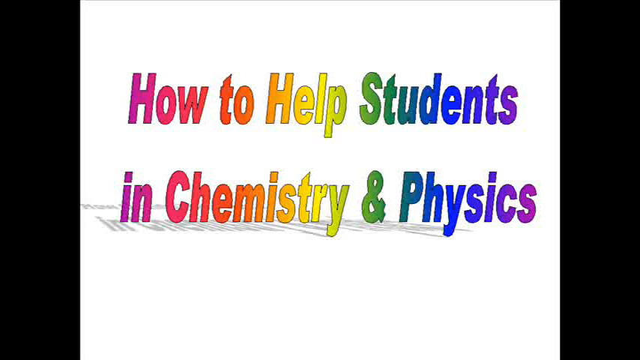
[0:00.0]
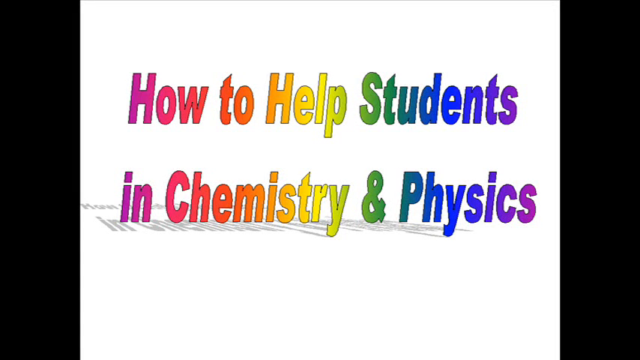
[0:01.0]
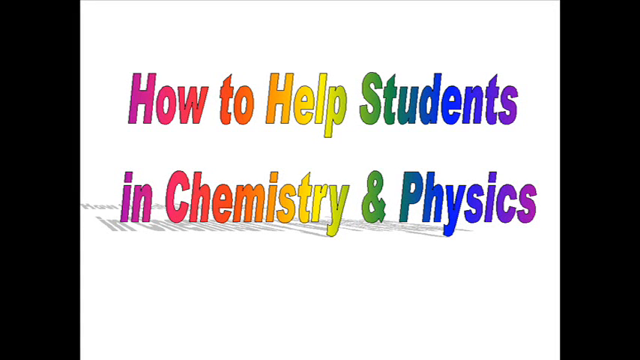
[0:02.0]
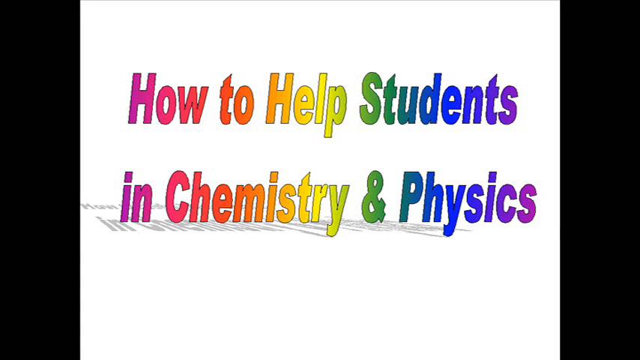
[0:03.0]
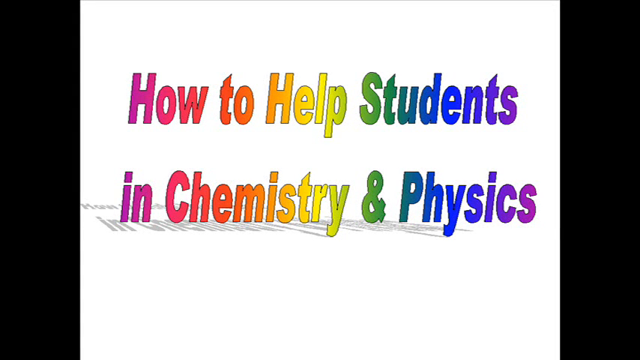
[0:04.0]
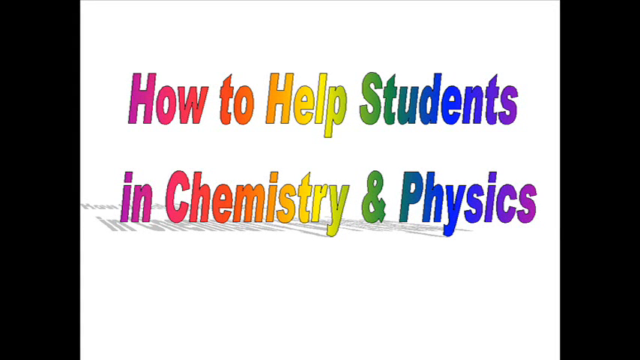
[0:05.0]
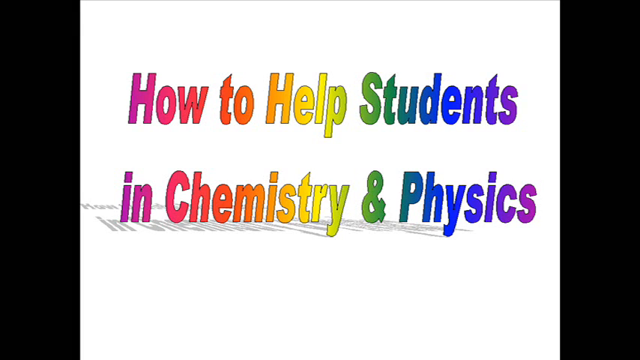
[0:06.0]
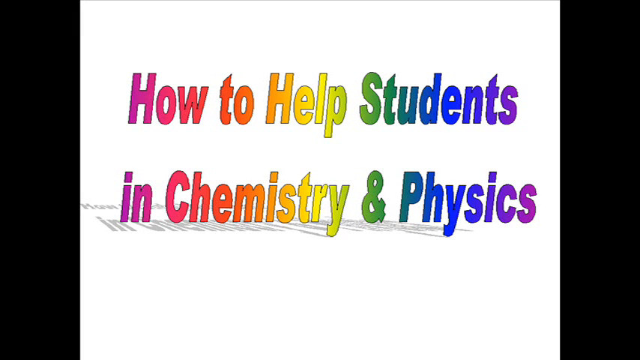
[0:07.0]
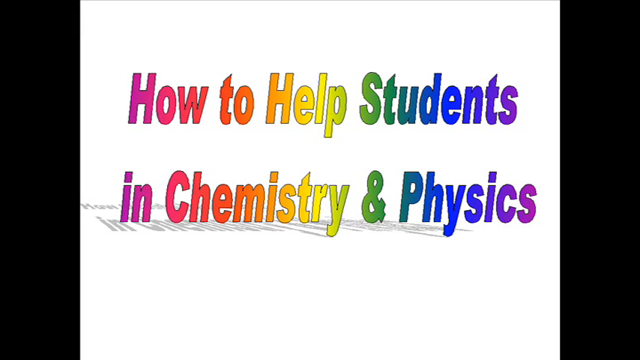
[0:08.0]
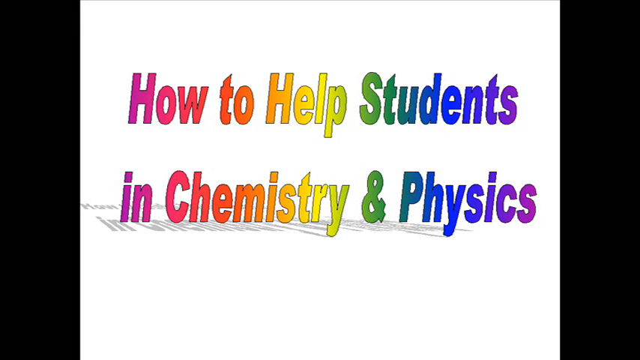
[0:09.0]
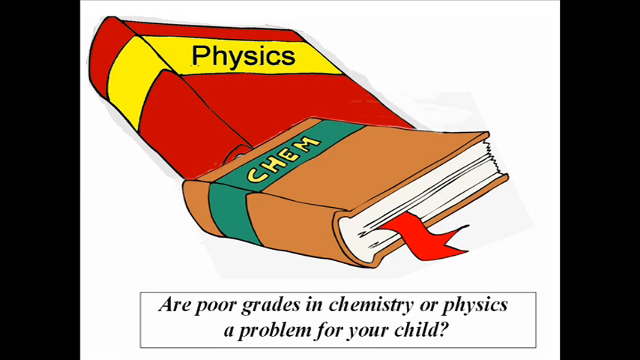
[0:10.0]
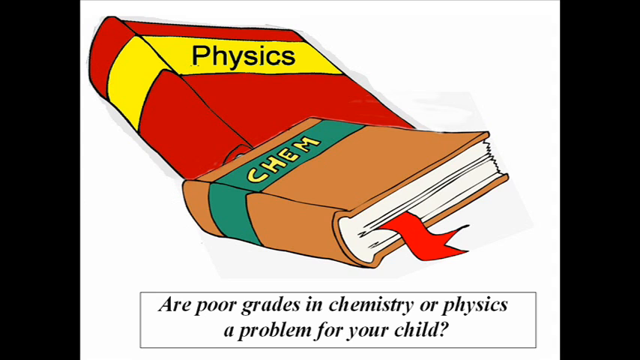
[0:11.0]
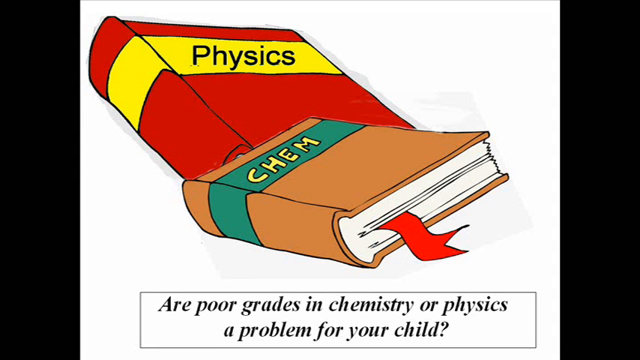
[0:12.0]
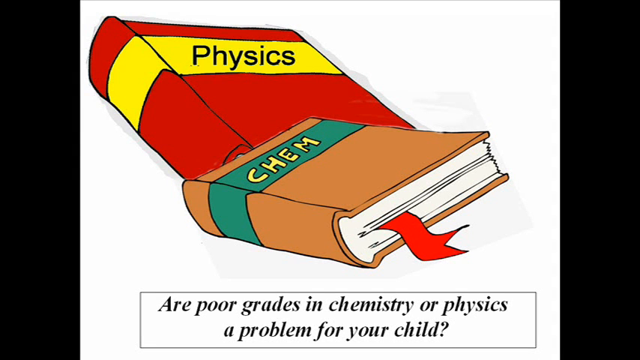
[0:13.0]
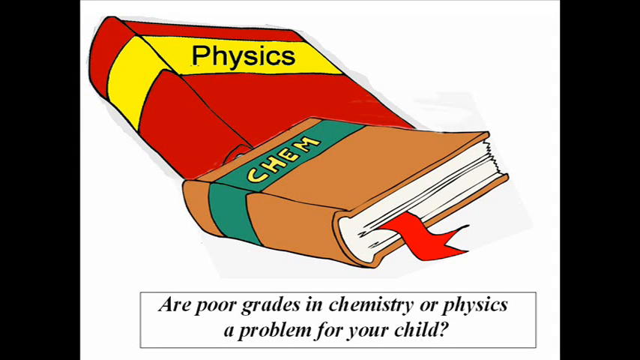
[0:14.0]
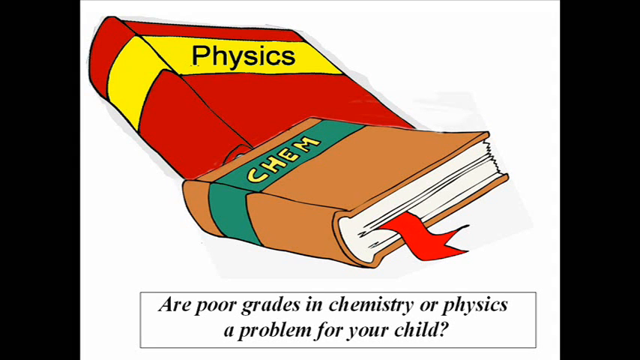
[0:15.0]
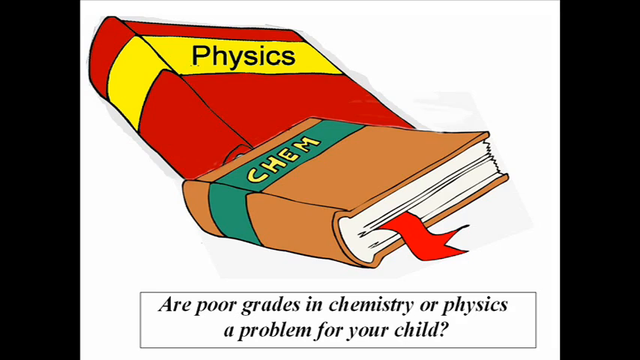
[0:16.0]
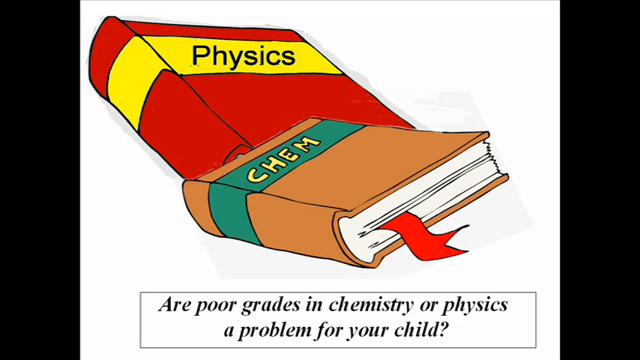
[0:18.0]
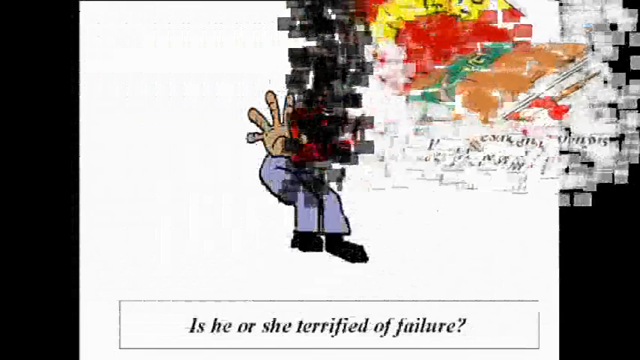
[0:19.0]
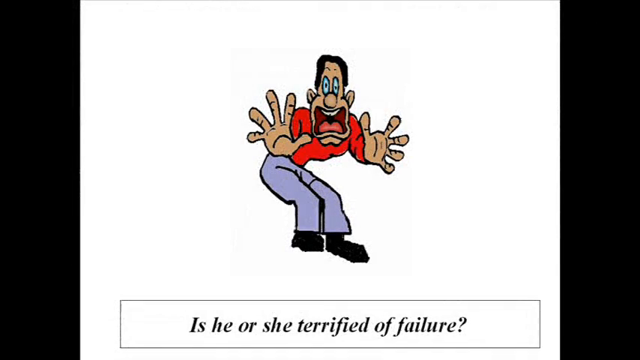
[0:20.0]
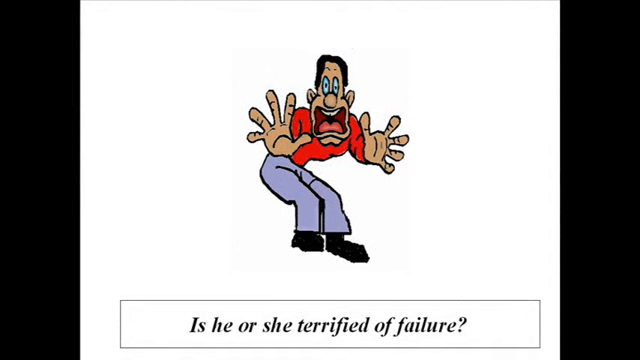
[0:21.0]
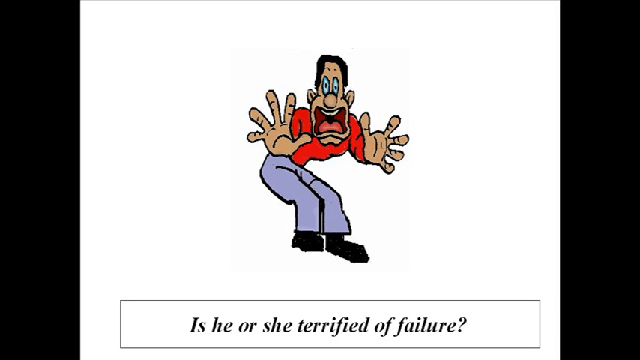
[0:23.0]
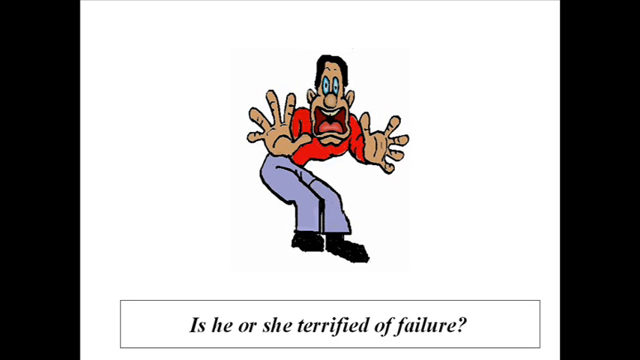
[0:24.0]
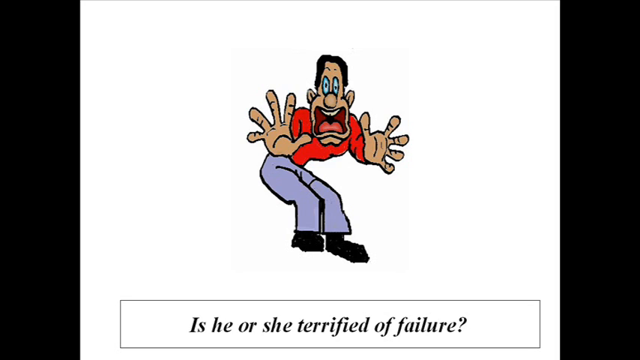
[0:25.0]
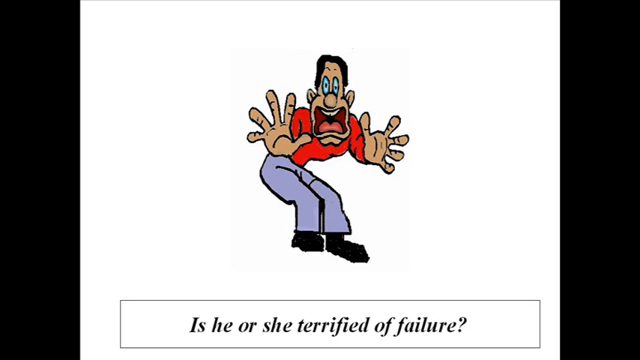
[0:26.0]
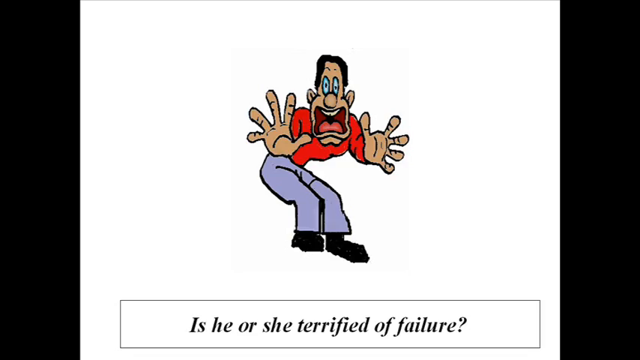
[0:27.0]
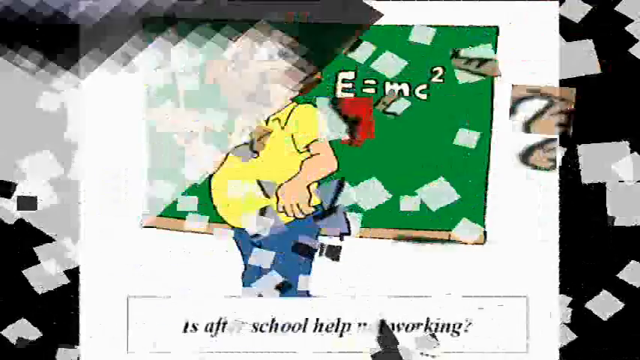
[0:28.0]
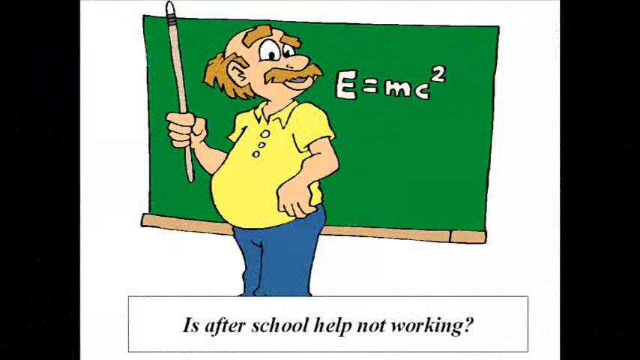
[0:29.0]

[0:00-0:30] The video opens on a white screen with two black bars on the left and right, creating a white square in the middle. In the white square is the text "How to help students in chemistry and physics," set in two lines, with "how to help students" on the top line and the rest on the bottom. A pink to purple gradient in a rainbow color style runs from left to right across the text, and the text's shadow appears on the floor. The screen then switches to another white square image showing two books that look like a drawing: a physics book and a chemistry book. The physics book is red with a yellow label reading "physics," and the chemistry book is brown with a cyan label reading "chem." Below them, text in a box reads "Are poor grades in chemistry or physics a problem for your child?" Next comes an image on a white background of a cartoon-style man with his hands up, bending over a little and looking frightened at the camera; at the bottom of the screen the text reads "is he or she terrified of failure." The screen then switches to another cartoon-style man in front of a chalkboard with "E equals MC squared" on it. He holds a stick and wears a yellow shirt and blue pants. He has a little bit of a belly, a thick brown mustache and bushy eyebrows, and he is balding on top with hair in the back. Text at the bottom ends with "after school help not working."